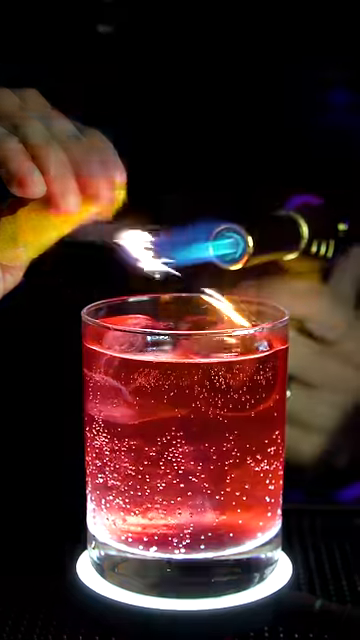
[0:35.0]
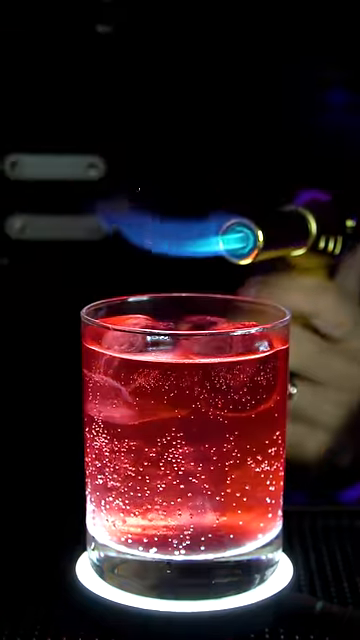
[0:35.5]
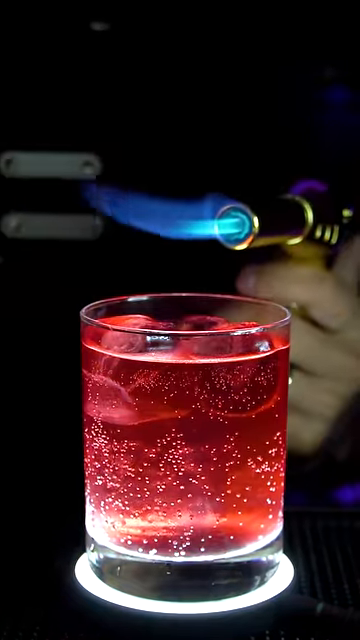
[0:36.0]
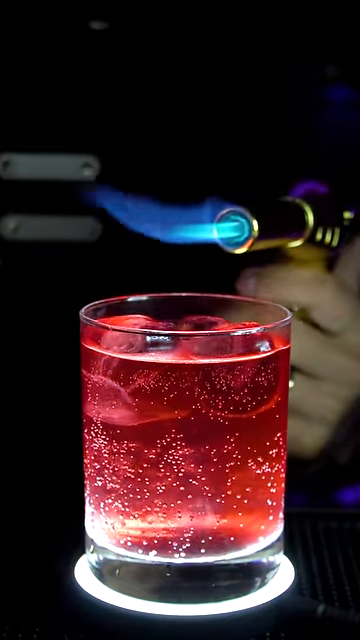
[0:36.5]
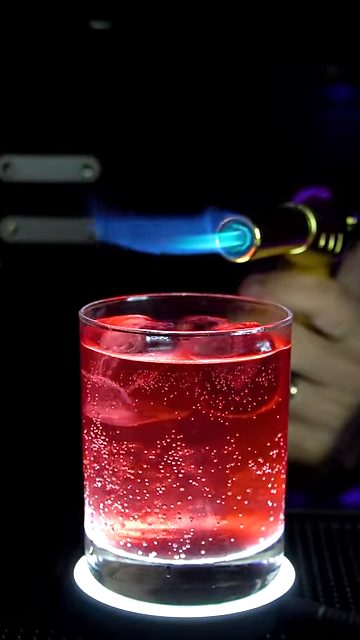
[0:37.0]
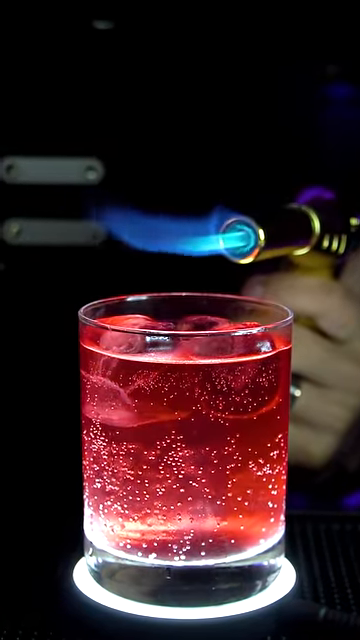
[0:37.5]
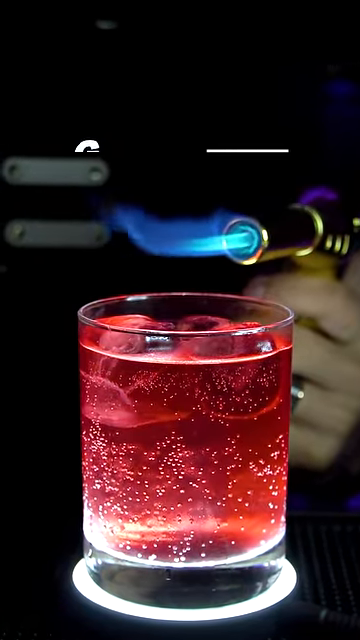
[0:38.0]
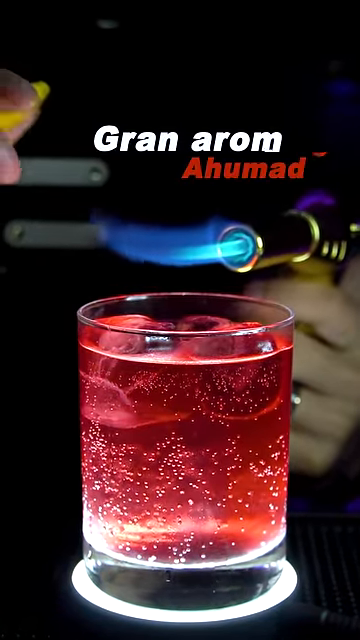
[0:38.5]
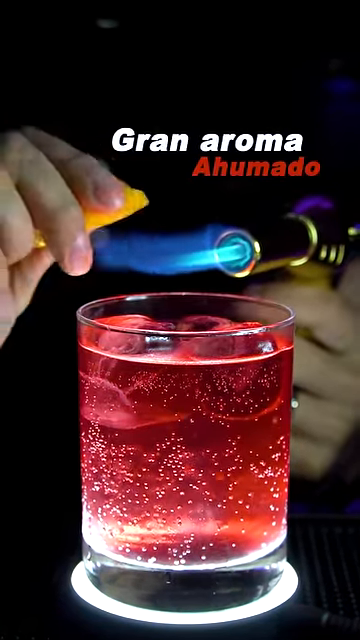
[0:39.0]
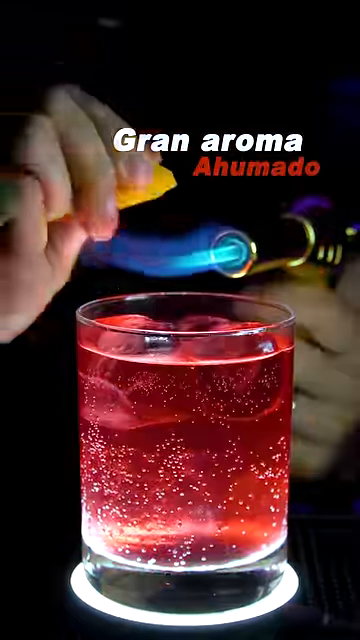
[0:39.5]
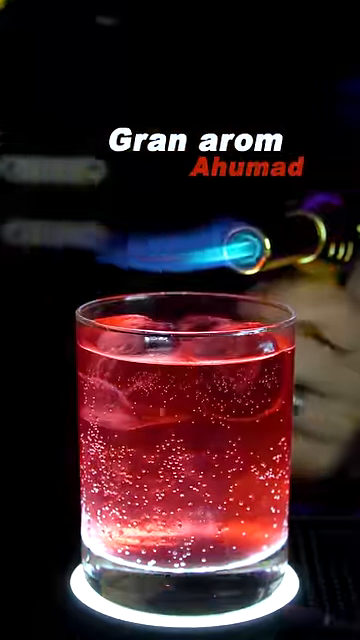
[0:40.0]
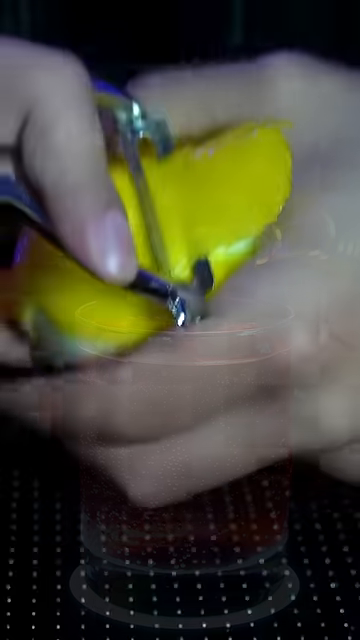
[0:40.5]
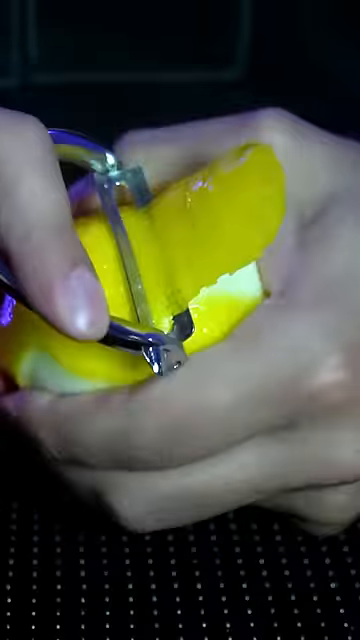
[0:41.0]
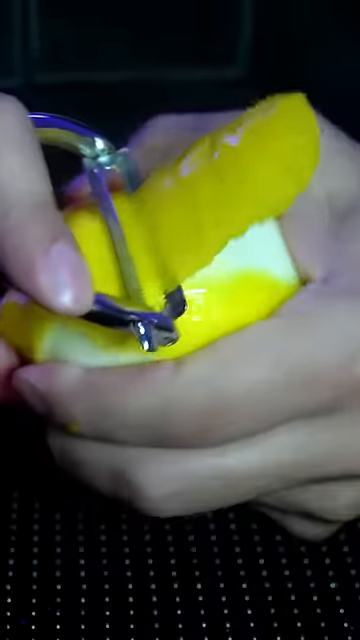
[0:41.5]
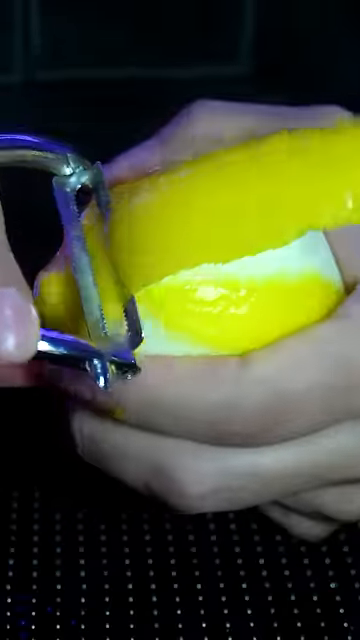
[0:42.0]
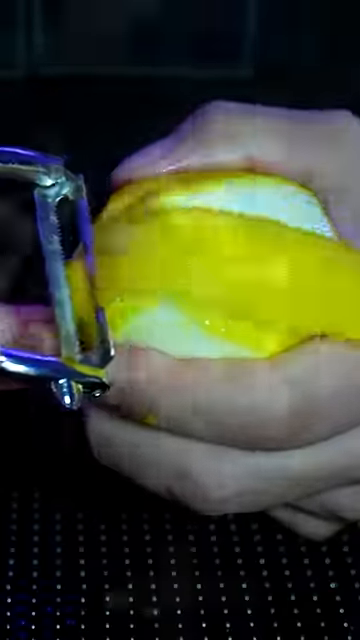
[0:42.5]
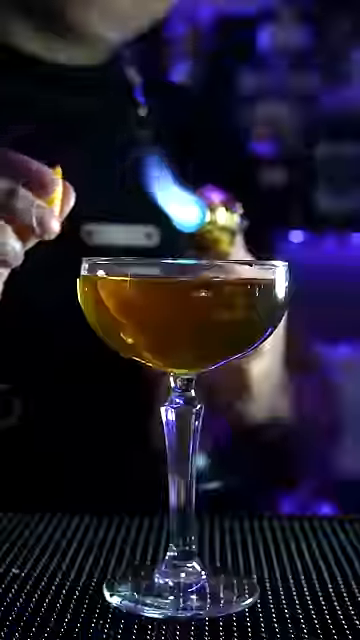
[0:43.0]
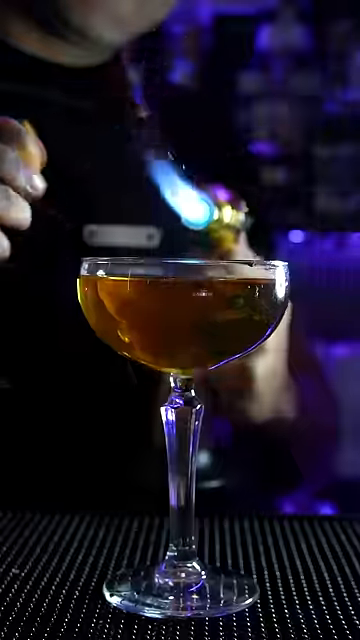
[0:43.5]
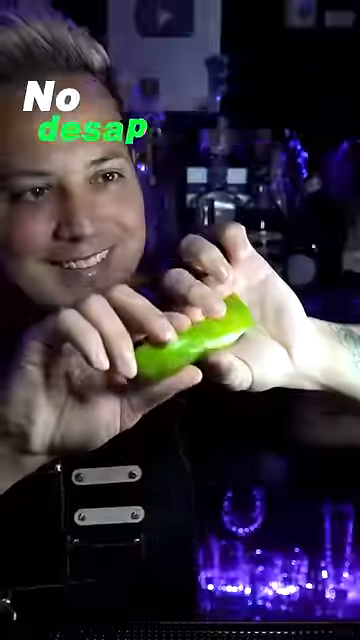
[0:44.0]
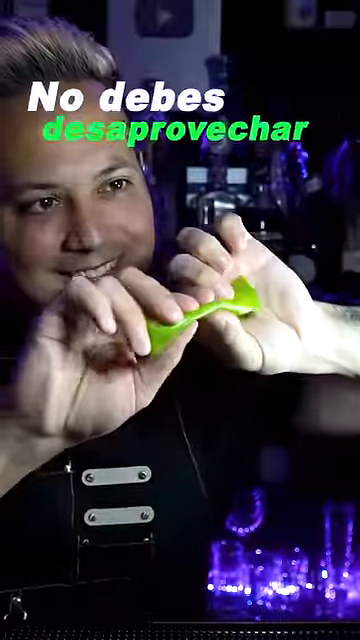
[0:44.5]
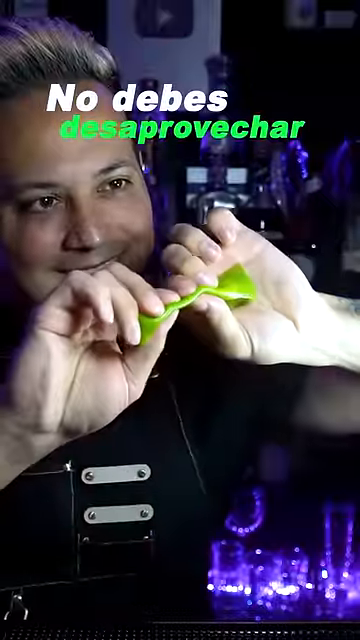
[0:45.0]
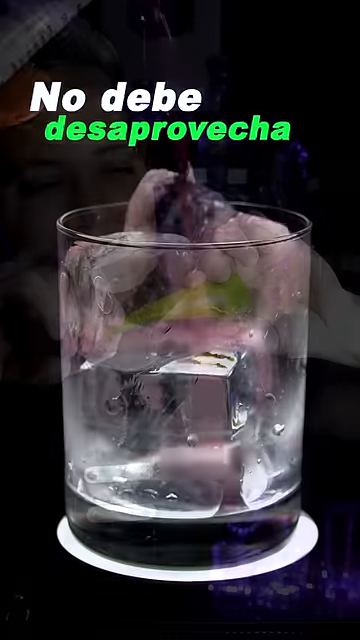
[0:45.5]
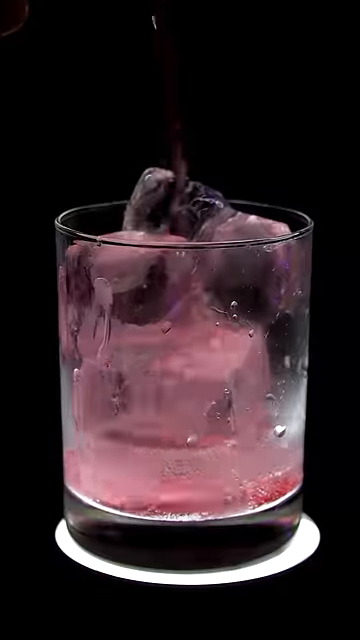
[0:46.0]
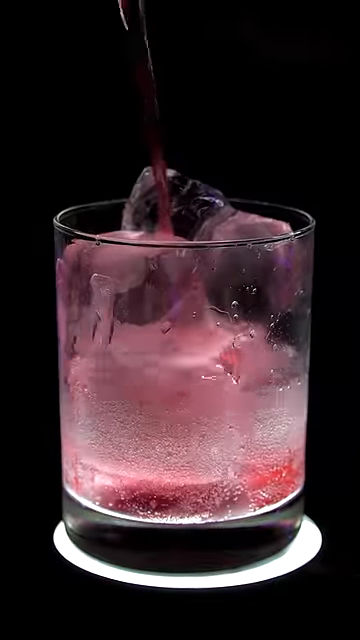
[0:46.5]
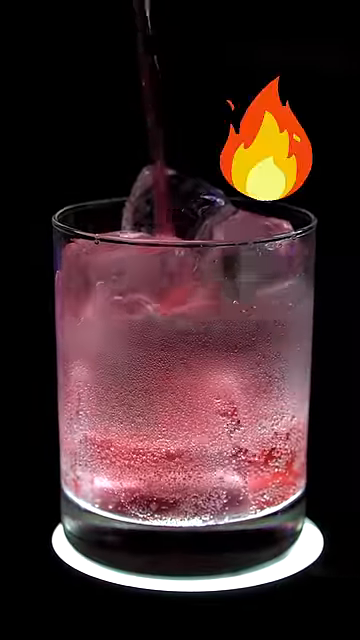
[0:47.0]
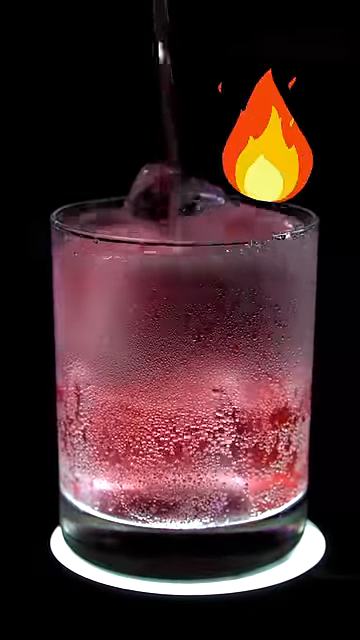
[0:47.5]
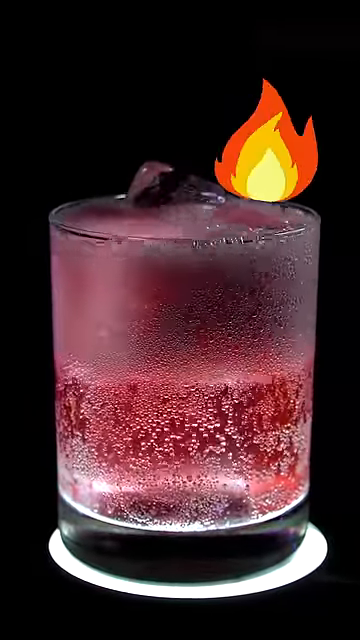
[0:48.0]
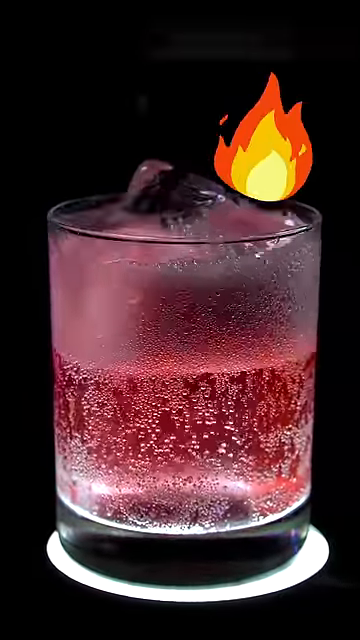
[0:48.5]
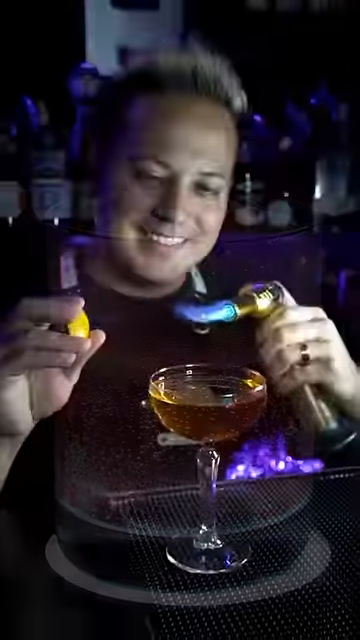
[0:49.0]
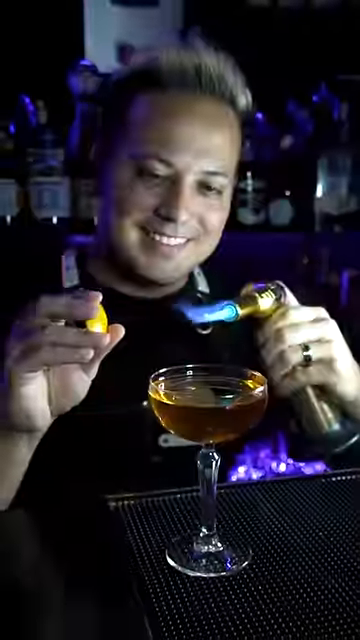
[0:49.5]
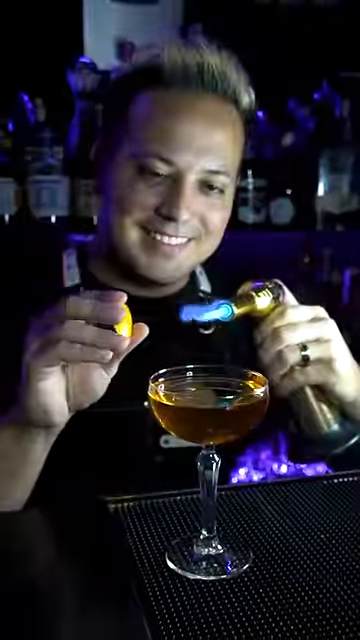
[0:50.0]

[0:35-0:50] The torch is shown above the drink, and the bartender shows how the zest lights up on fire; he then does the same with another drink. Words on screen say "grand aroma". He shows again how he makes the zest with the peeler, fills the drink, which is reddish, and the zest catches on fire from the little butane torch. The peeler produces big, long pieces of zest; he holds a piece horizontally and squeezes it so the citrus juices squirt out into the flame and cause a spark above the drink. He does this above a drink in a glass kind of shaped like a wide champagne or cocktail glass, and then above a short glass like a highball glass. He shows all three kinds of citrus, the orange, the lemon and the lime, once again, a little cartoon flame appears, and the words "grand aroma" are visible.